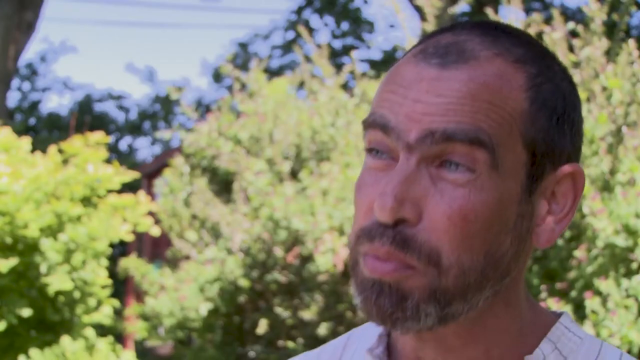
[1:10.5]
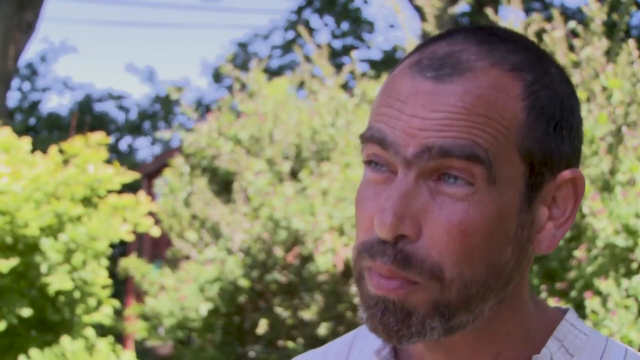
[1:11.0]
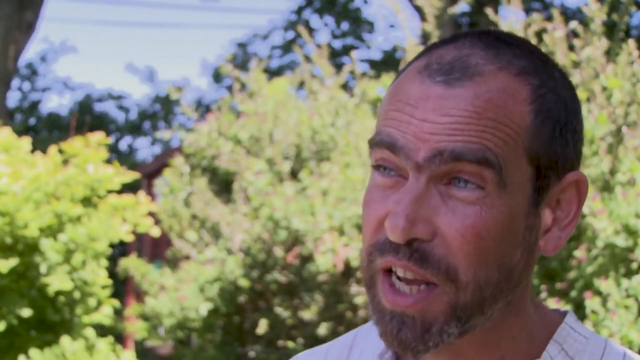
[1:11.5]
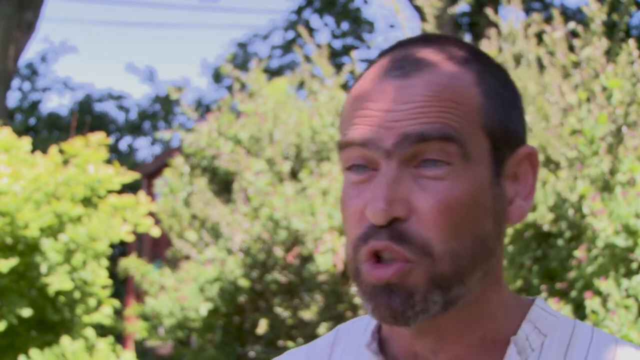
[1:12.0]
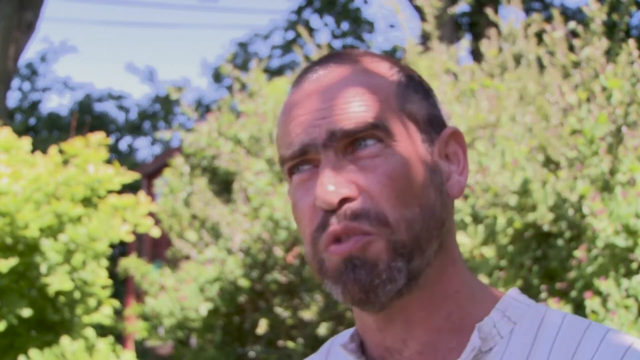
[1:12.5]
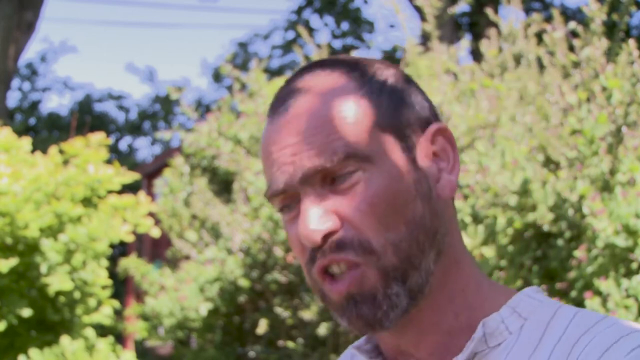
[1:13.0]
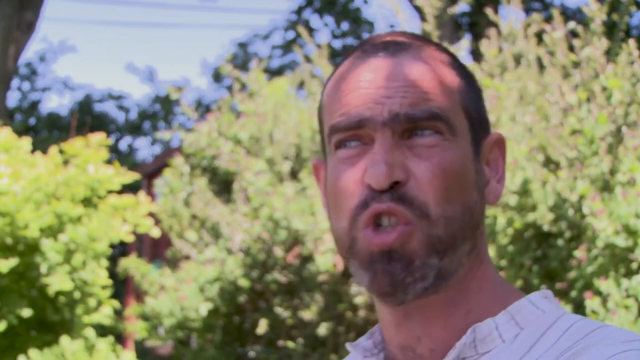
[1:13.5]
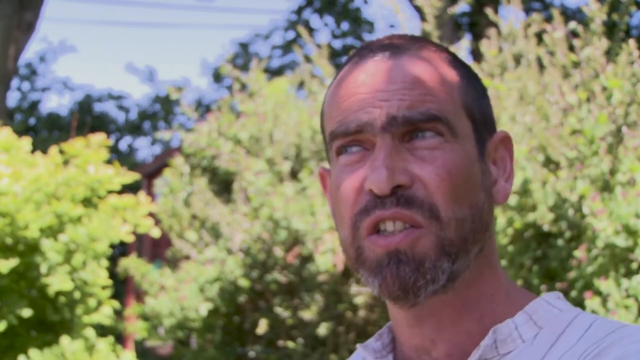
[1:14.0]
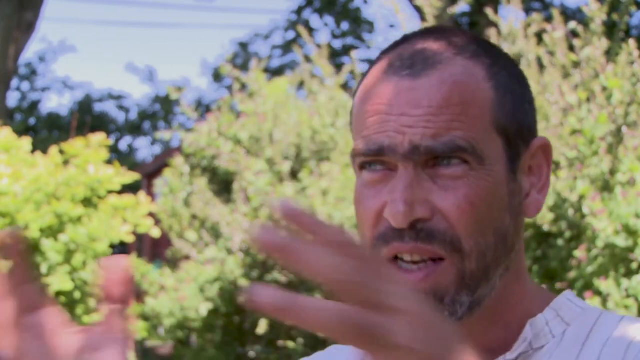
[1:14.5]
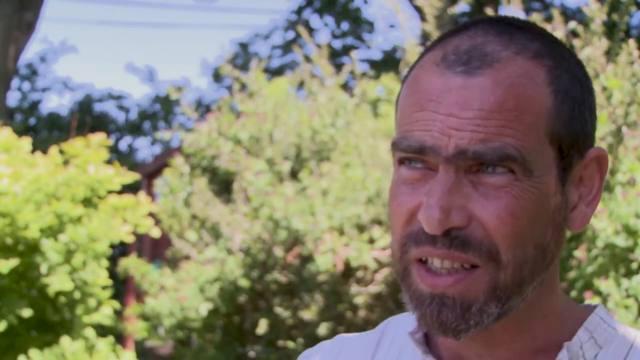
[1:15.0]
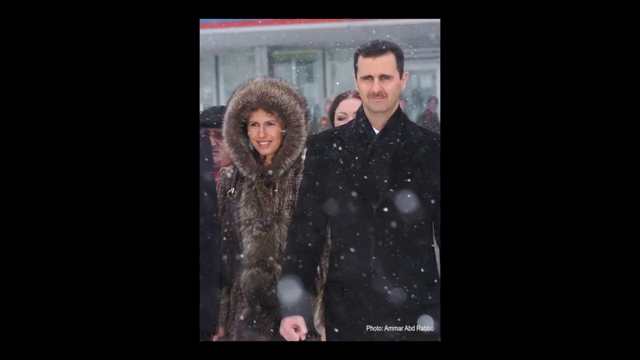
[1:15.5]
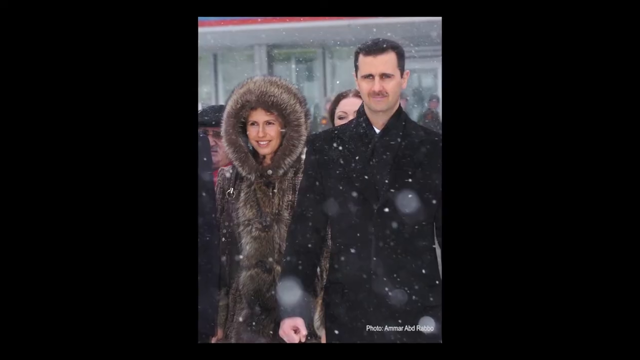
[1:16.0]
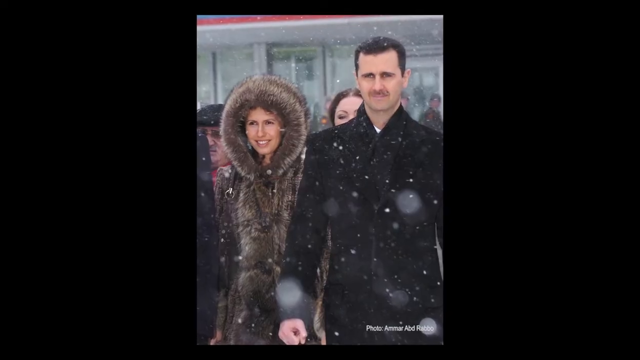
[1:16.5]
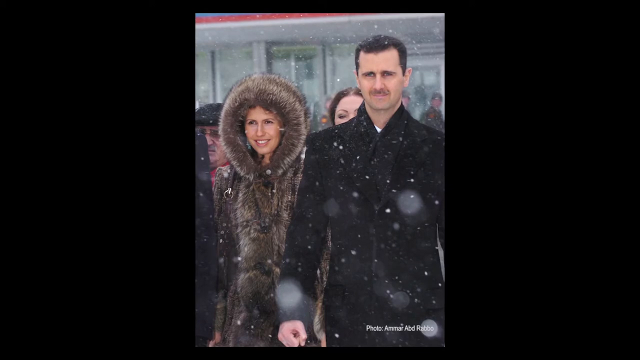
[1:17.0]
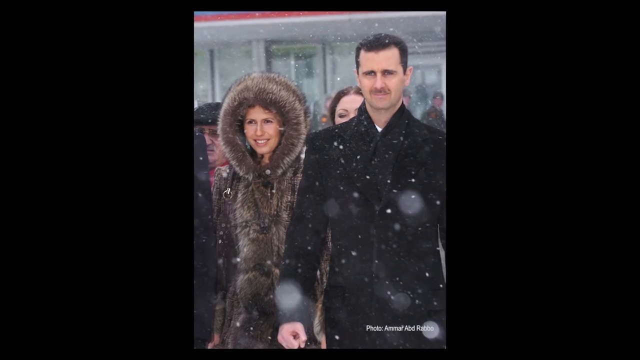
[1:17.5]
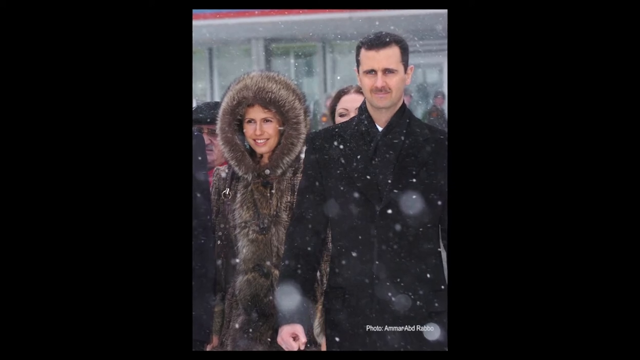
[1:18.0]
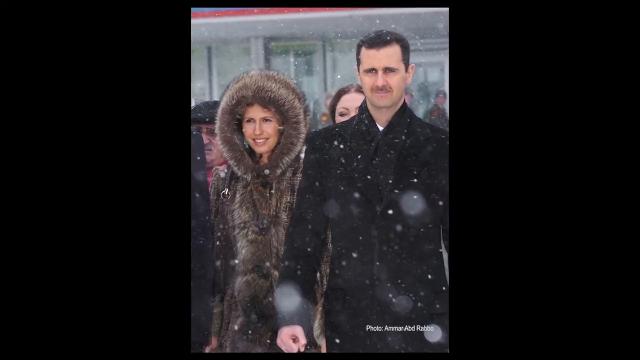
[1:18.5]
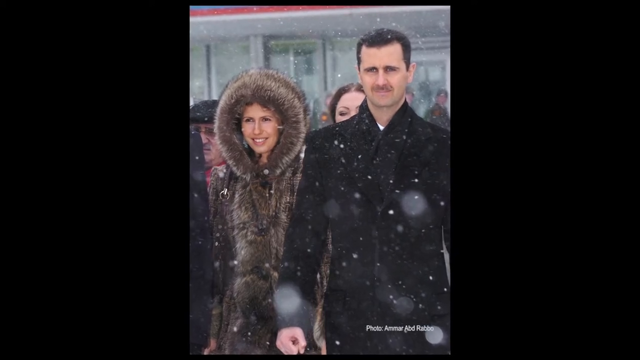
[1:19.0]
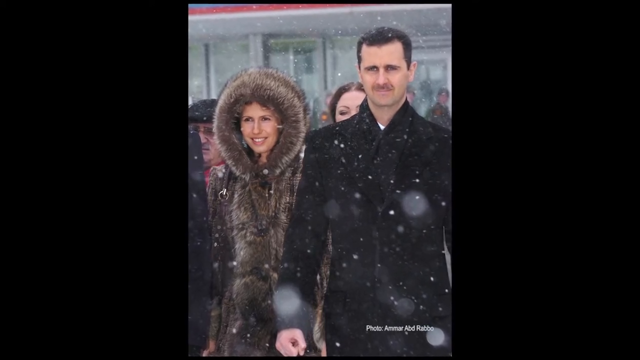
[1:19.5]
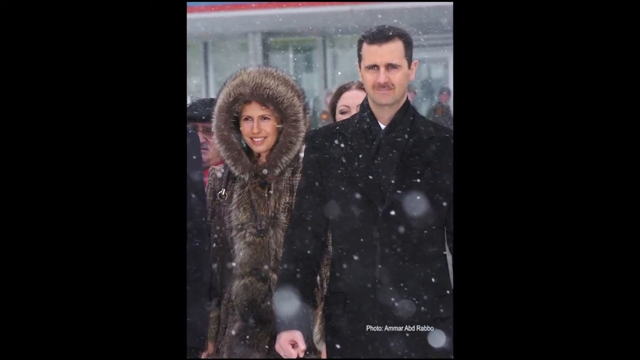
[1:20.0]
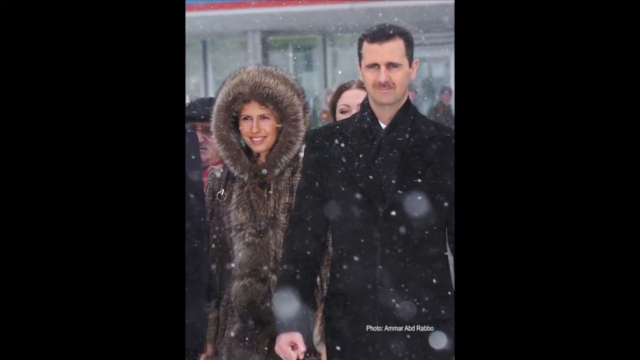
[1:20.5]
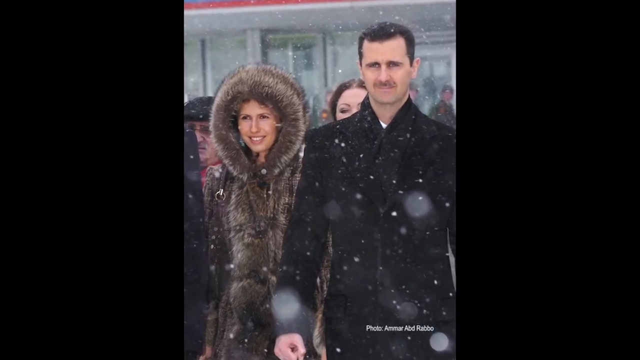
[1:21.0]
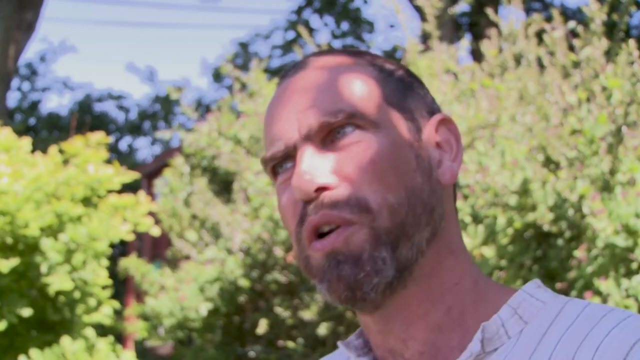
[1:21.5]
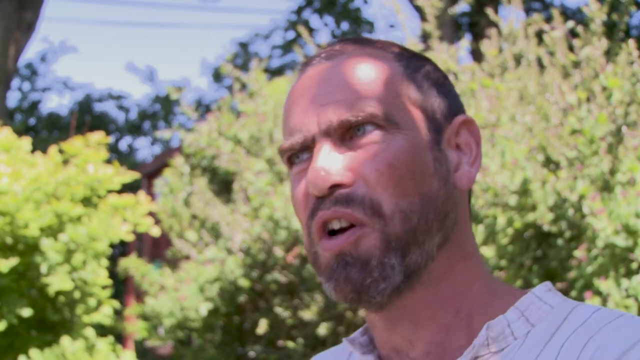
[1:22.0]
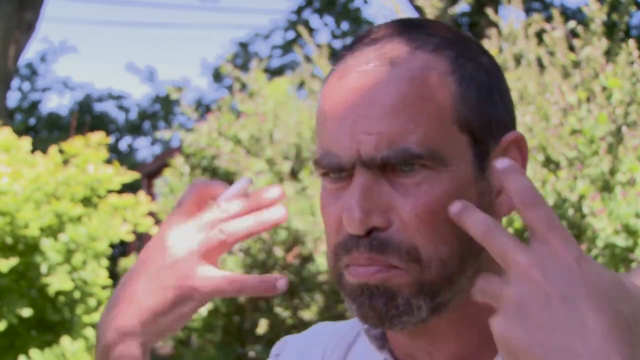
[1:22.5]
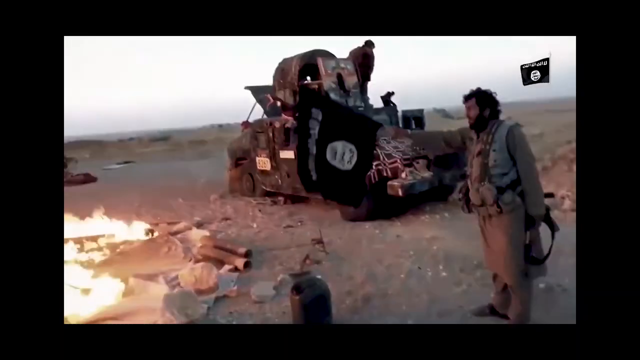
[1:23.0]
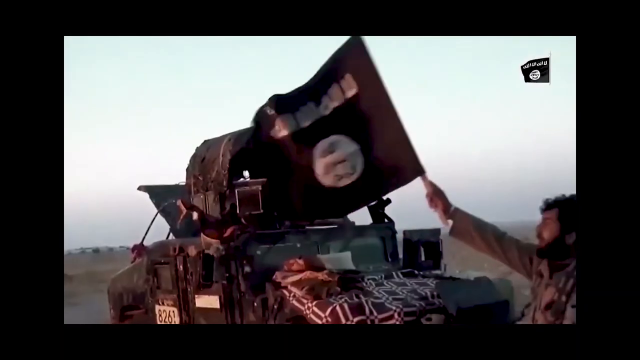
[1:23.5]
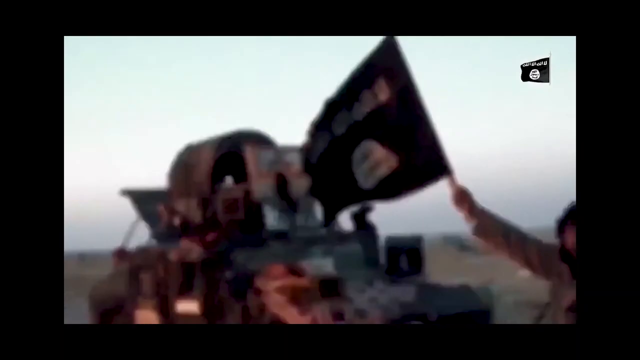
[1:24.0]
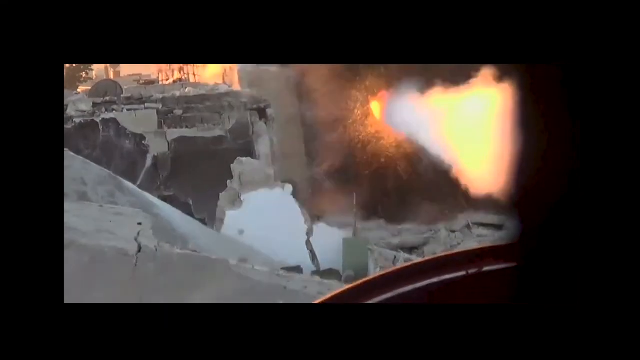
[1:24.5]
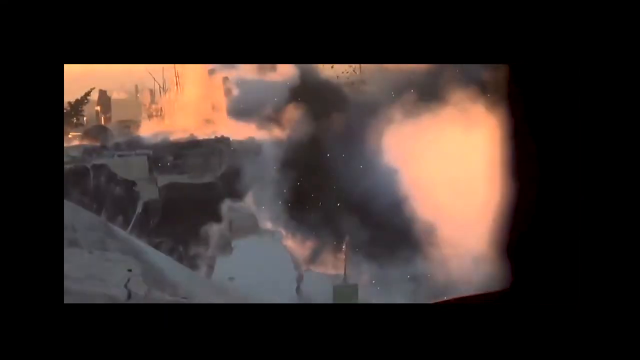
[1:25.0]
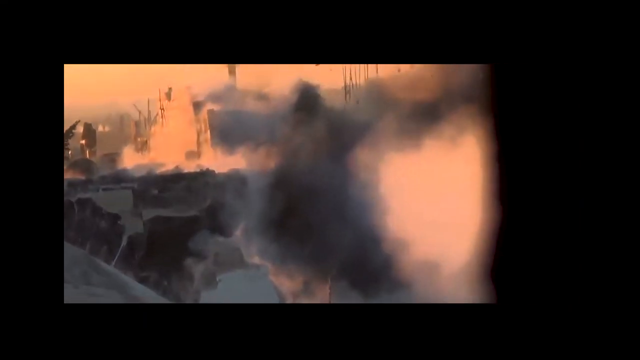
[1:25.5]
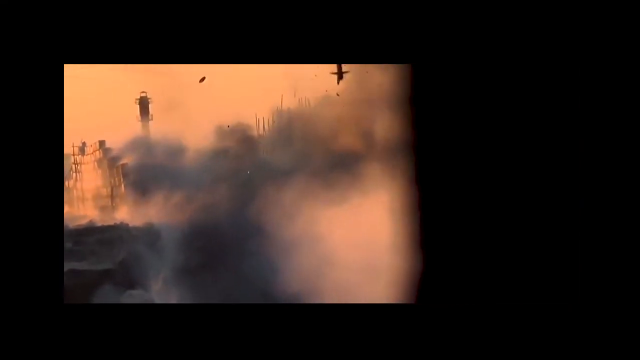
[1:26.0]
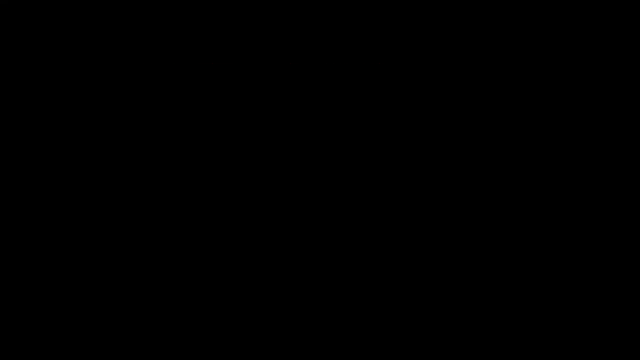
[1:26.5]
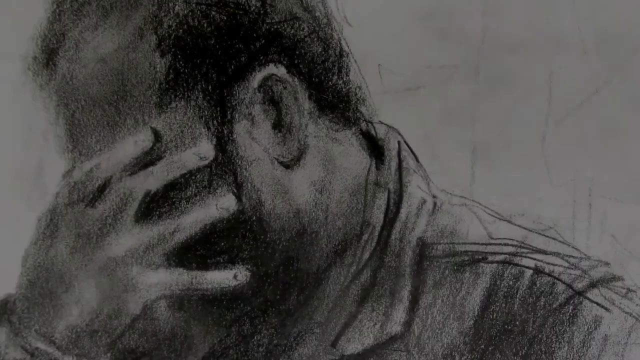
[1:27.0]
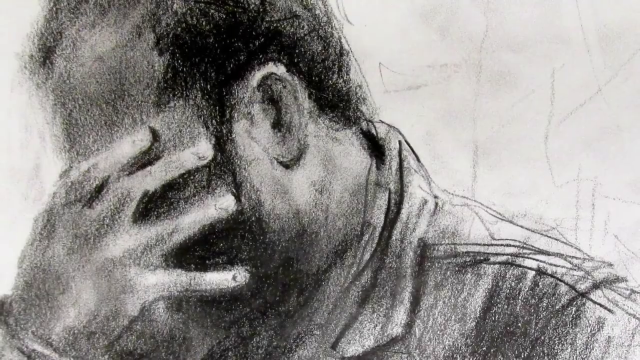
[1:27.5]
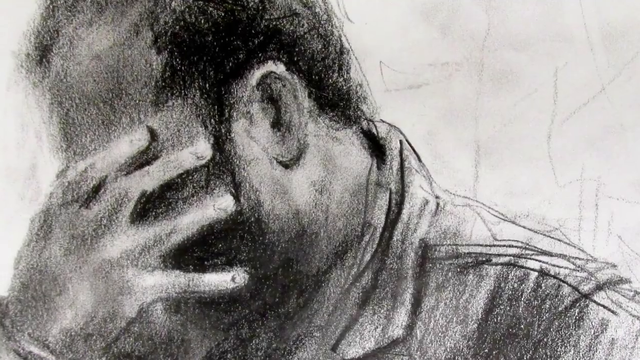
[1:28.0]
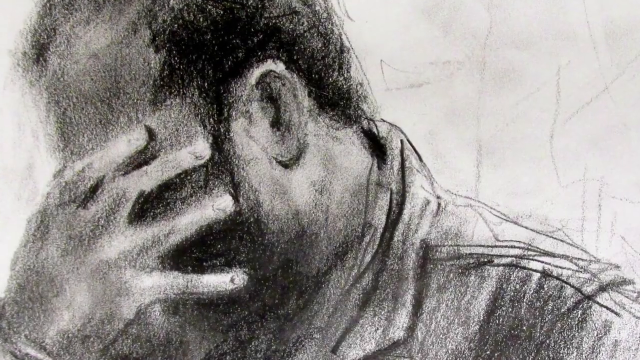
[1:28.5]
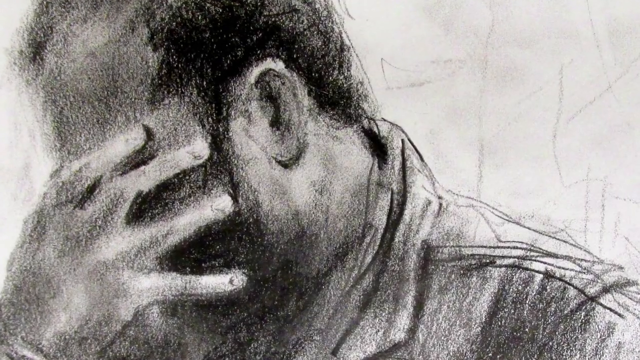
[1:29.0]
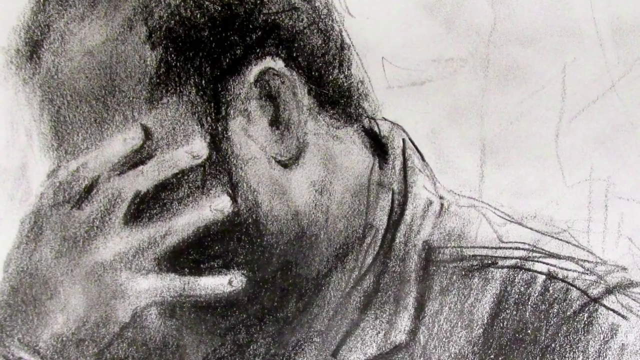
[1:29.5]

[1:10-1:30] A woman who may be the president's wife wears a fair coat with her head covered. Flags are being blown in the wind. A man covers his face, appearing worried. In scenes of war, buildings are being destroyed and guns are blazing, and a flag is flown.